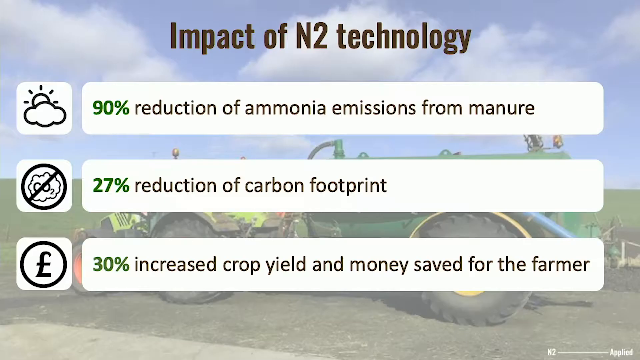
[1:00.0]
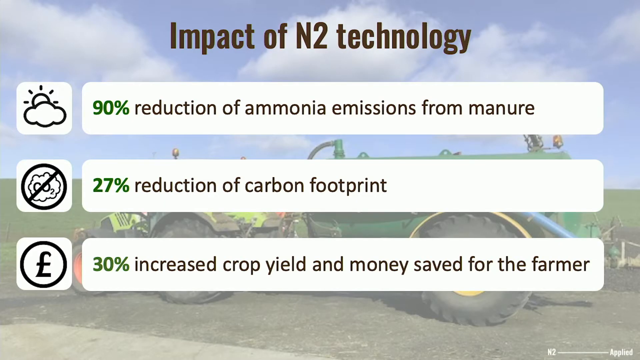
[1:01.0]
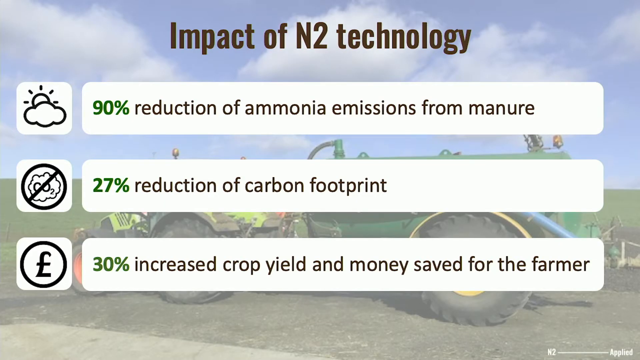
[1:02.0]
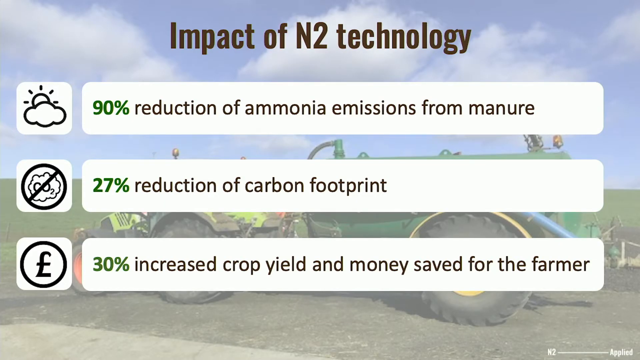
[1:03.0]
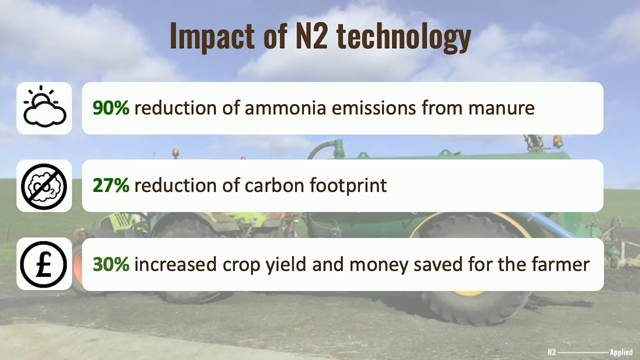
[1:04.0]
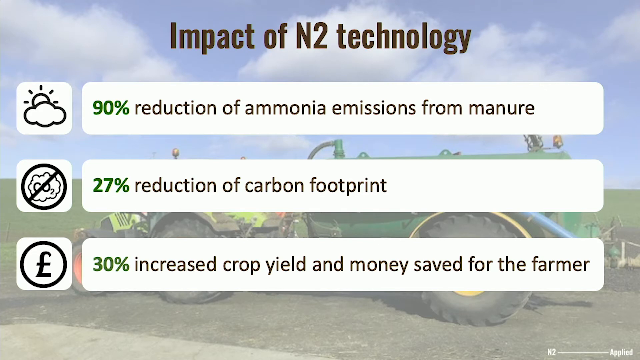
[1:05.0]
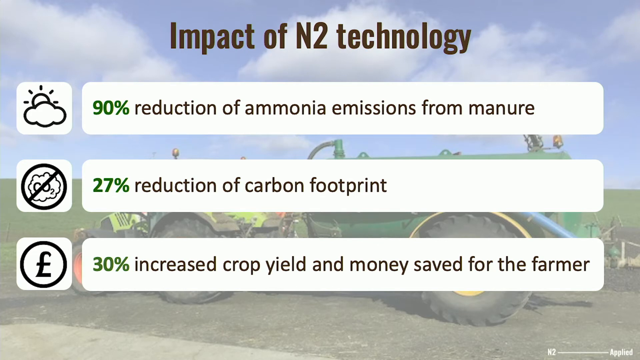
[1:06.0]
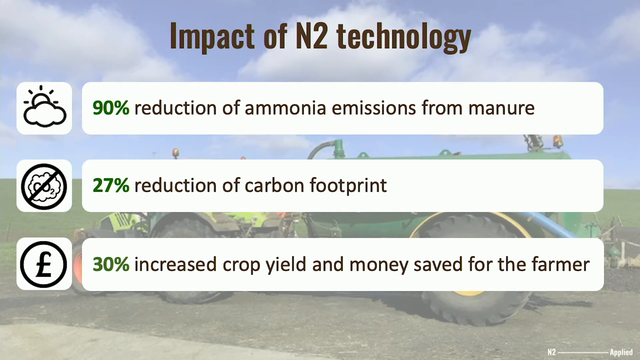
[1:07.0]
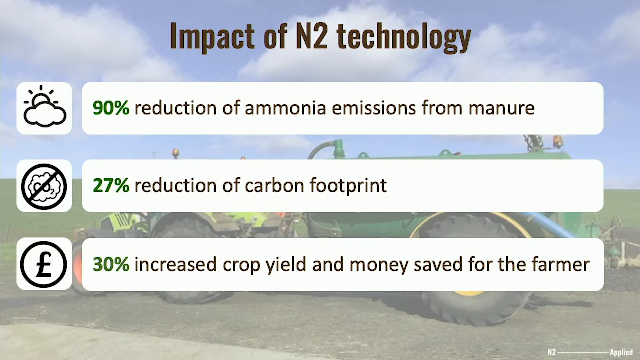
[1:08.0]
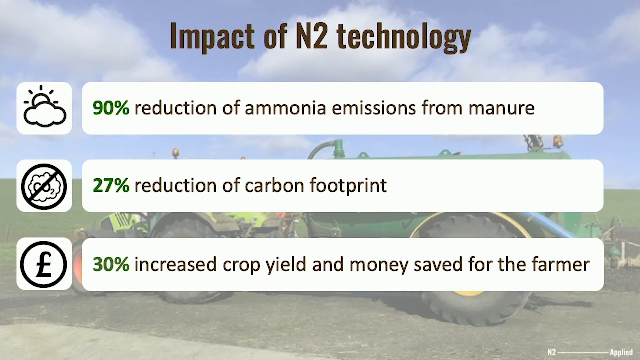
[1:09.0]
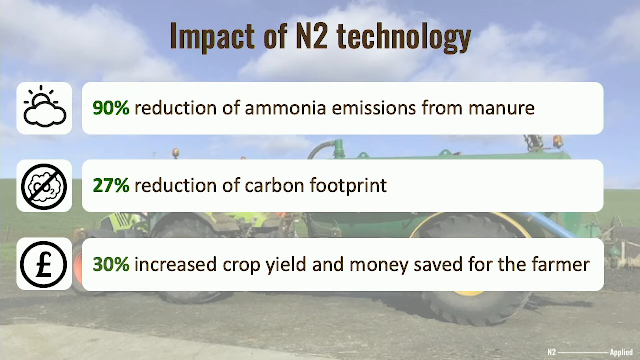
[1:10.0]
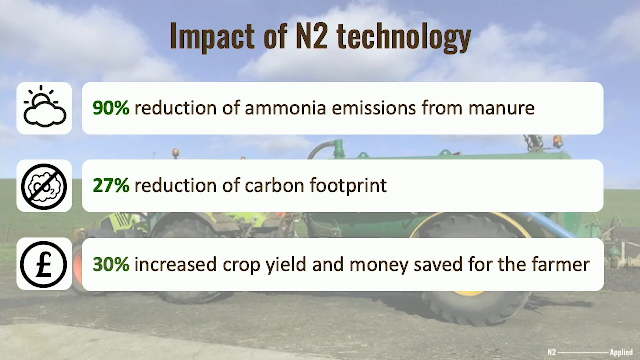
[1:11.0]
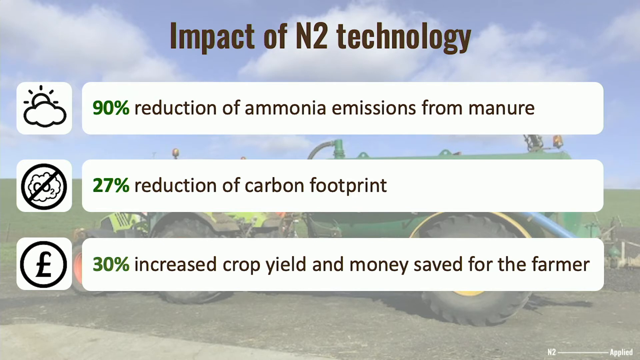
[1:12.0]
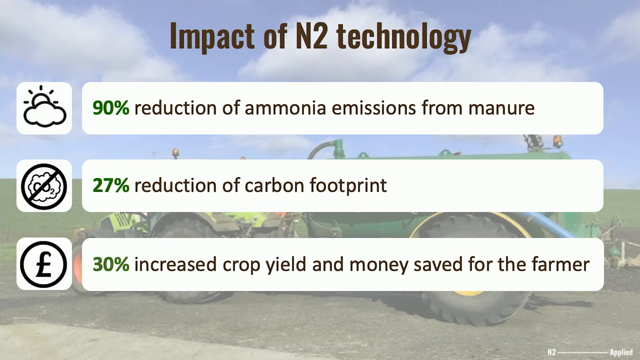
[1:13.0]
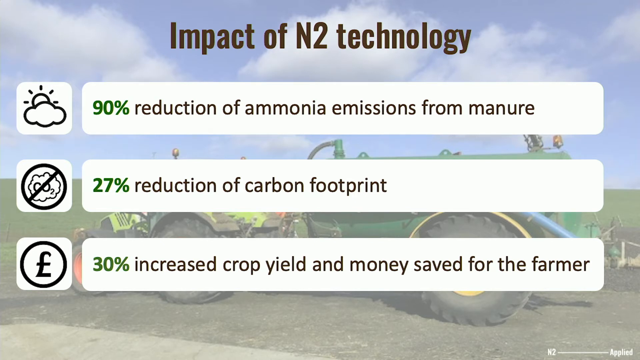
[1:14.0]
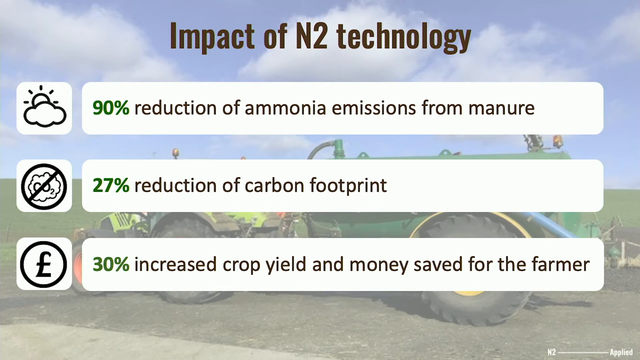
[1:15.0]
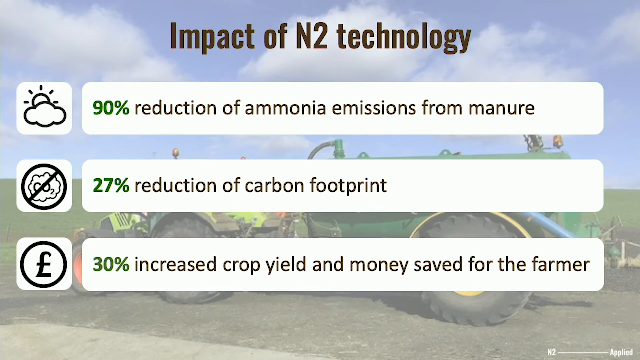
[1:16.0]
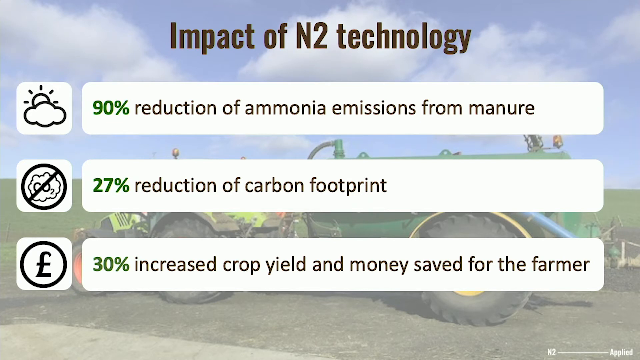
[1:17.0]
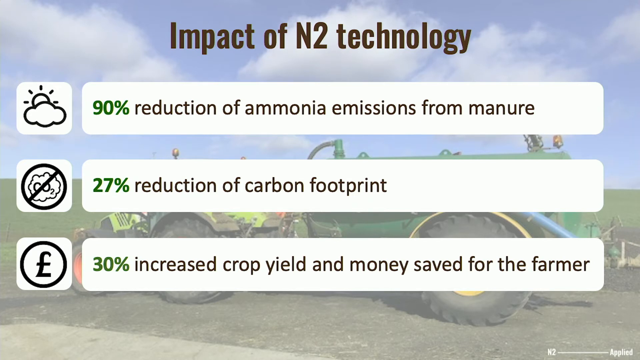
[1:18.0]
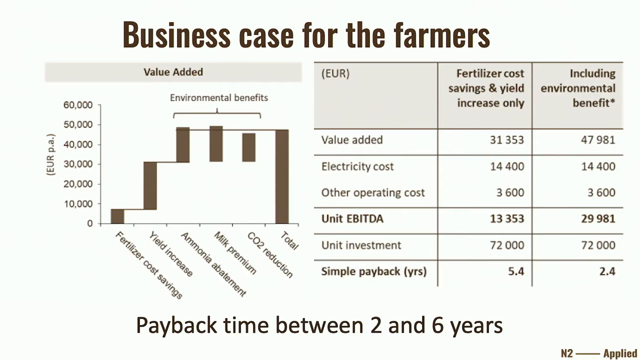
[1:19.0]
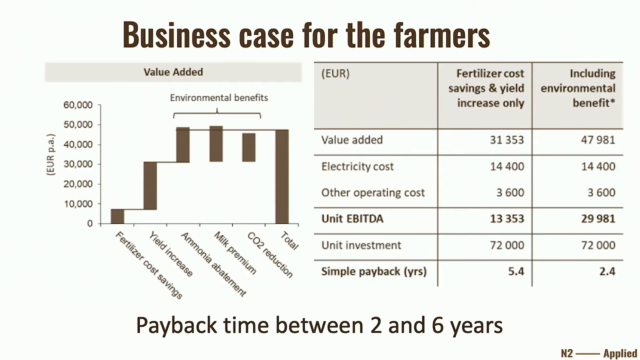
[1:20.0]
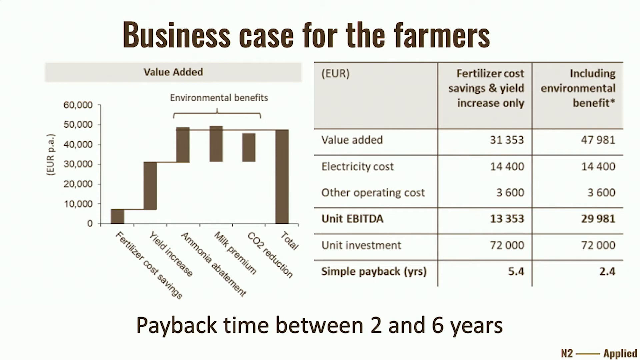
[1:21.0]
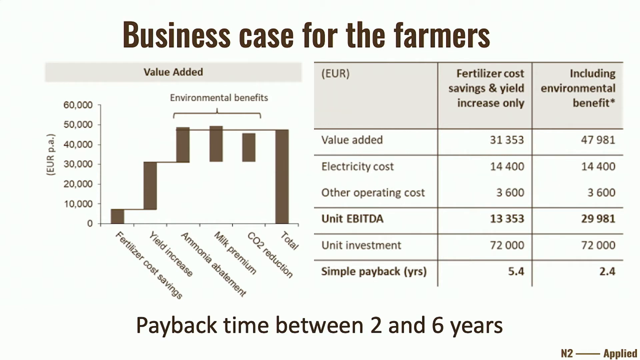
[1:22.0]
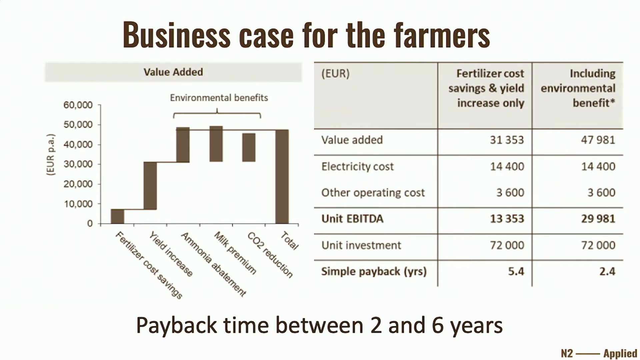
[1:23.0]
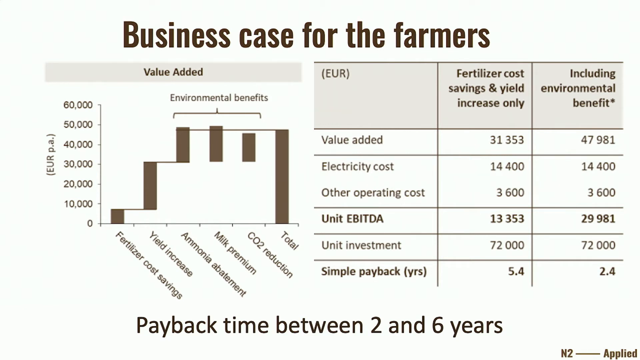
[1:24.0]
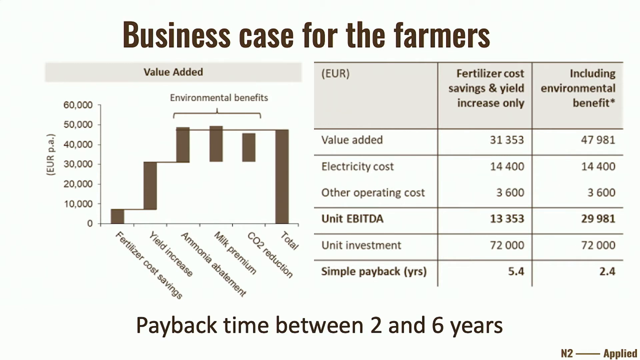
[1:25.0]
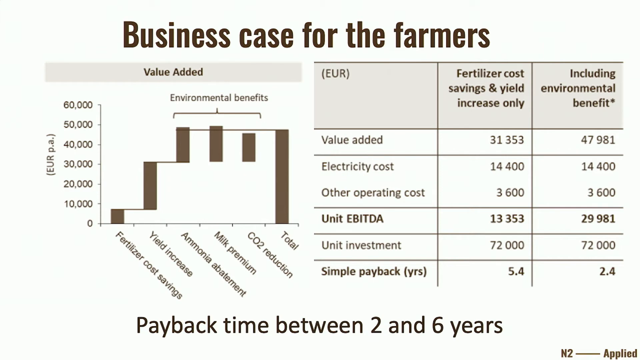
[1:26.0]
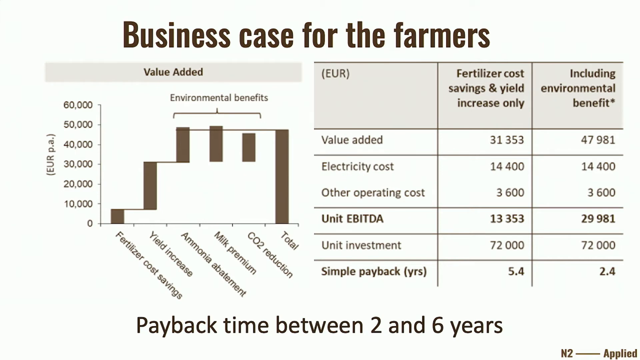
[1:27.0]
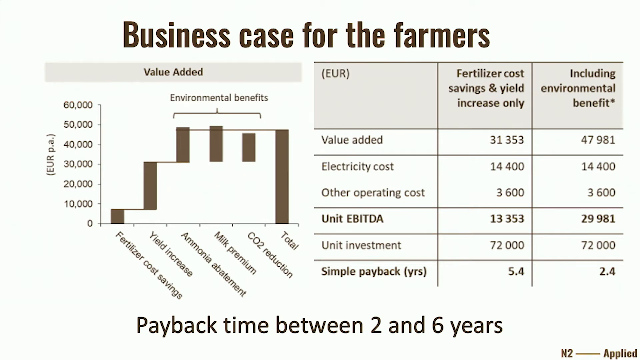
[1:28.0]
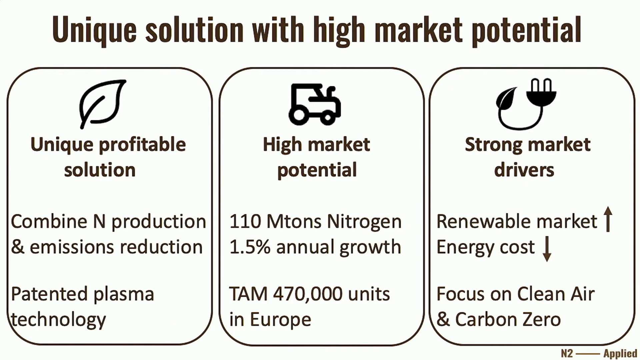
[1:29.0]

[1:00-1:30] An outdoor farm scene shows a tractor facing sideways, its right side visible, on a flat grassy area. Superimposed on it are three white banners, one on top of the other, under a heading in bold black text: "Impact of N2 Technology". The first reads "90% reduction of ammonia emissions from manure", with an illustration of a sun and a cloud. Below that is "27% reduction of carbon footprint", and at the bottom "30% increased crop yield and money saved for the farmer". The scene then changes to a solid white background with two types of charts, topped by "Business case for the farmers". A bar graph on the left covers fertilizer cost savings, yield increase, ammonia abatement, milk premium, CO2 reduction, and a final total. On the right are three columns: one listing EUR, fertilizer costs to the right, savings and yield increase only, and finally including environmental benefit, with statistics.